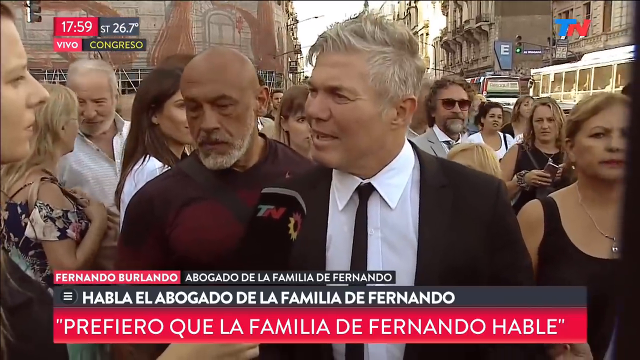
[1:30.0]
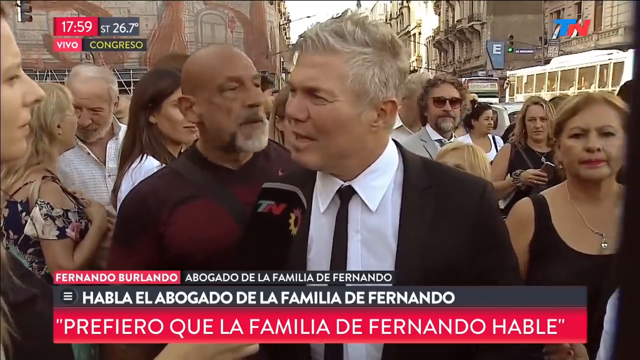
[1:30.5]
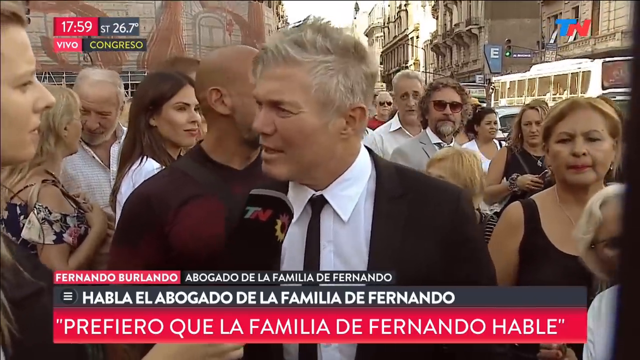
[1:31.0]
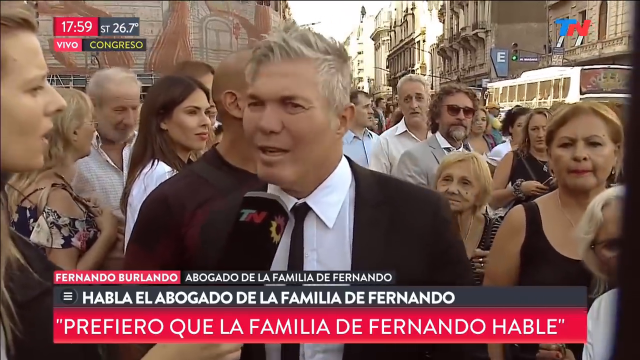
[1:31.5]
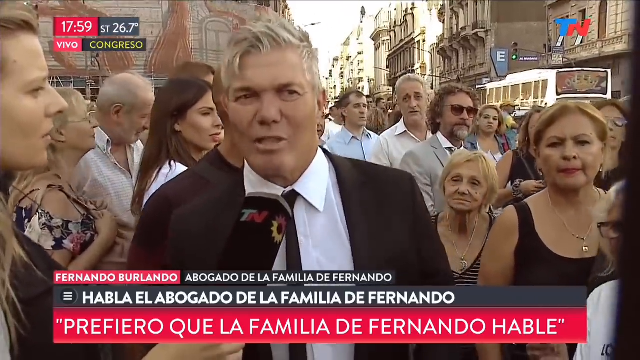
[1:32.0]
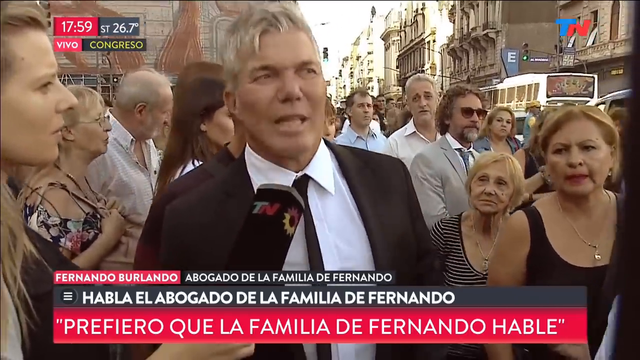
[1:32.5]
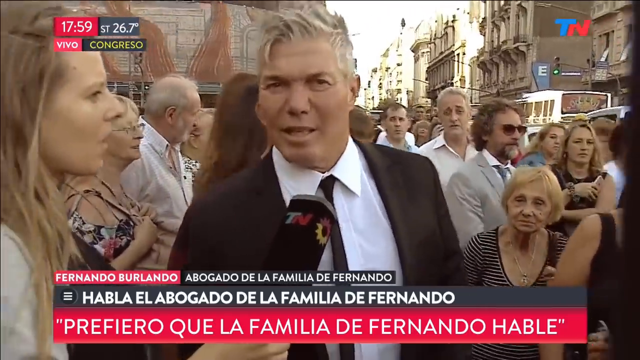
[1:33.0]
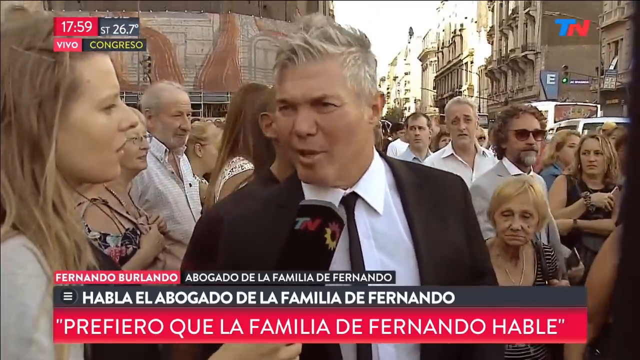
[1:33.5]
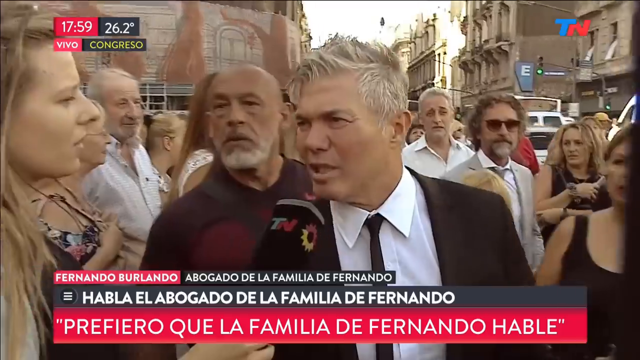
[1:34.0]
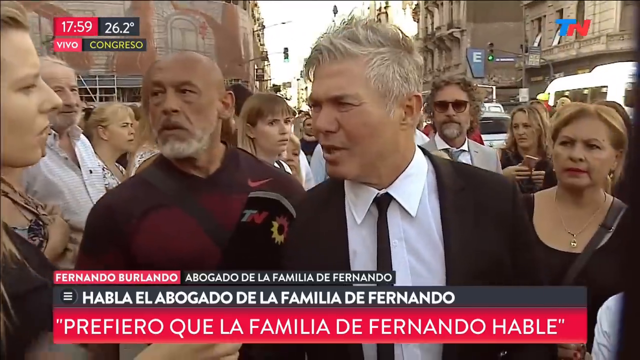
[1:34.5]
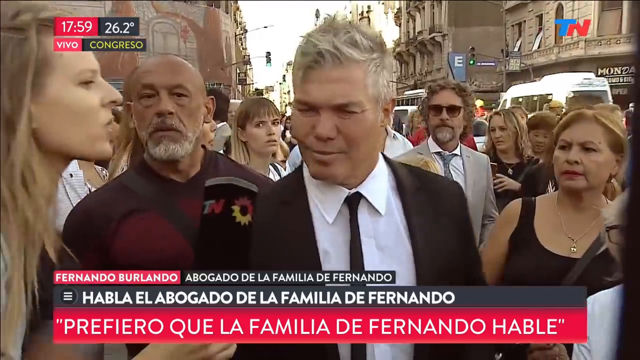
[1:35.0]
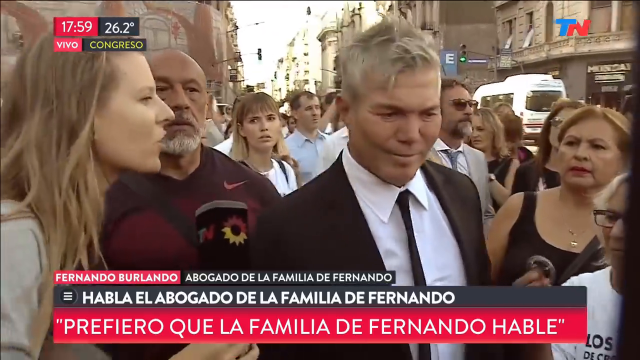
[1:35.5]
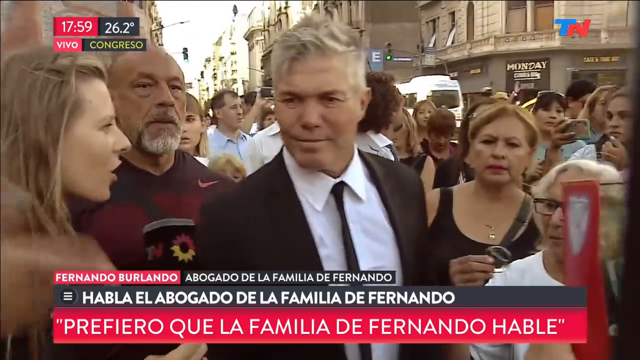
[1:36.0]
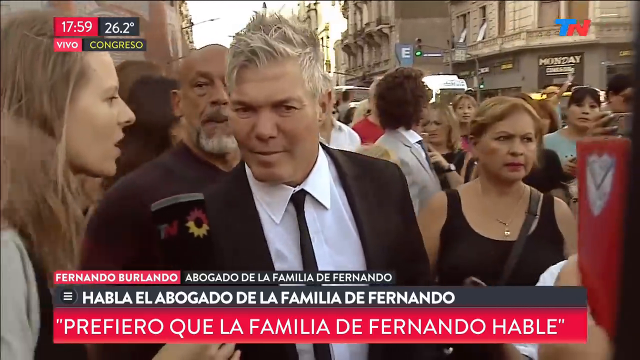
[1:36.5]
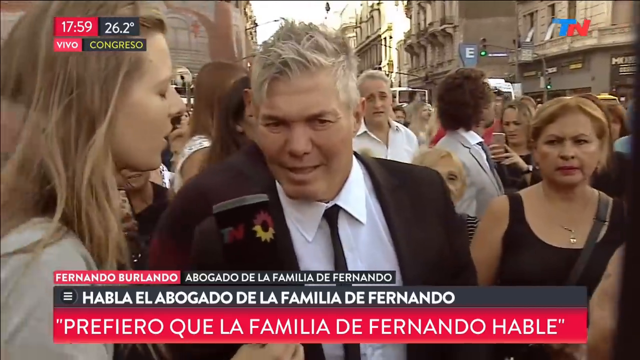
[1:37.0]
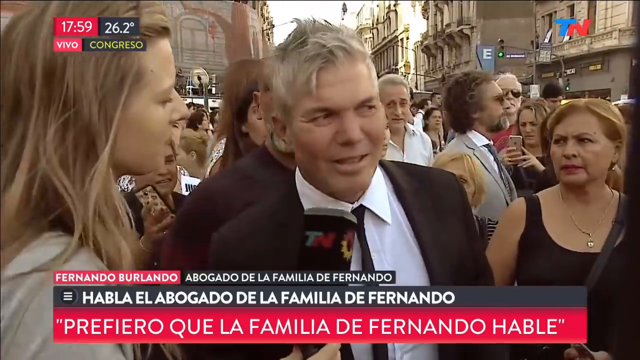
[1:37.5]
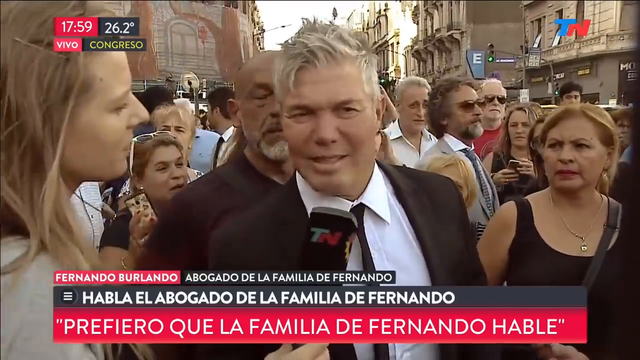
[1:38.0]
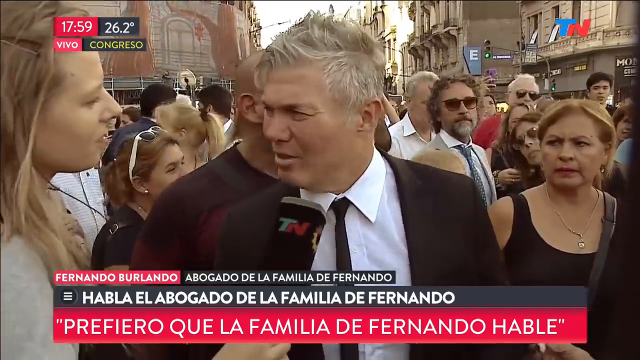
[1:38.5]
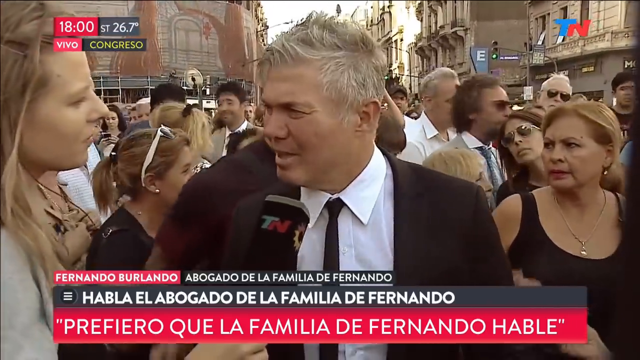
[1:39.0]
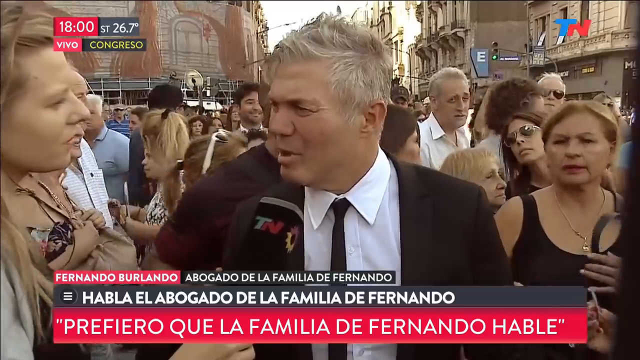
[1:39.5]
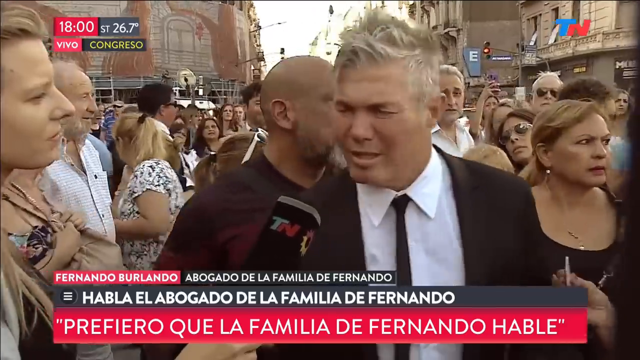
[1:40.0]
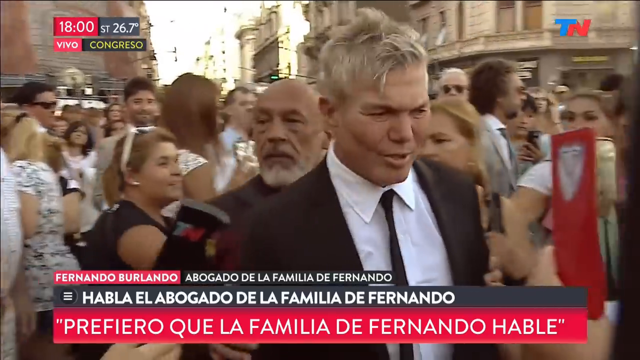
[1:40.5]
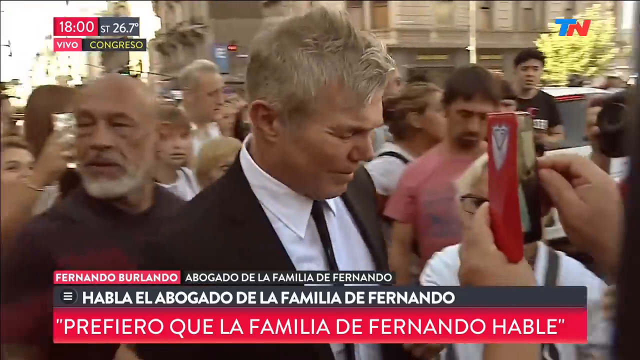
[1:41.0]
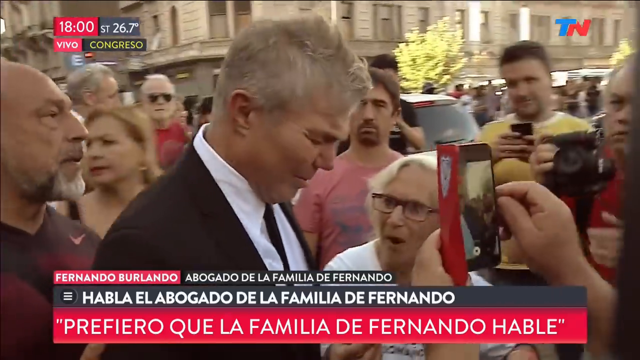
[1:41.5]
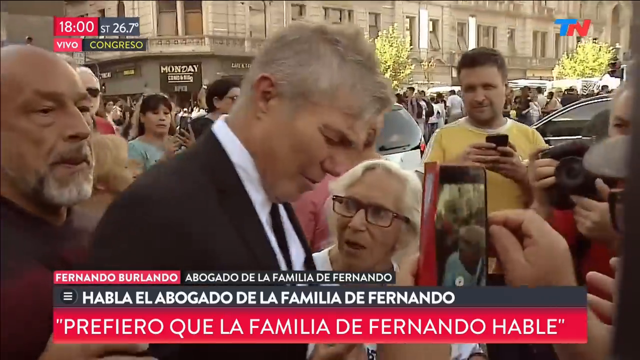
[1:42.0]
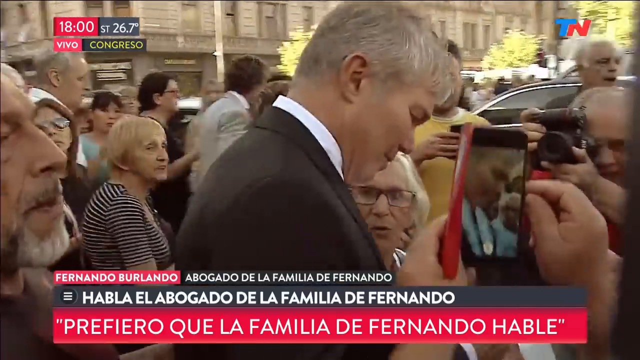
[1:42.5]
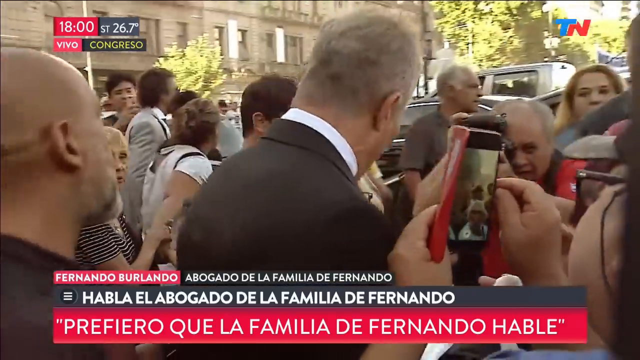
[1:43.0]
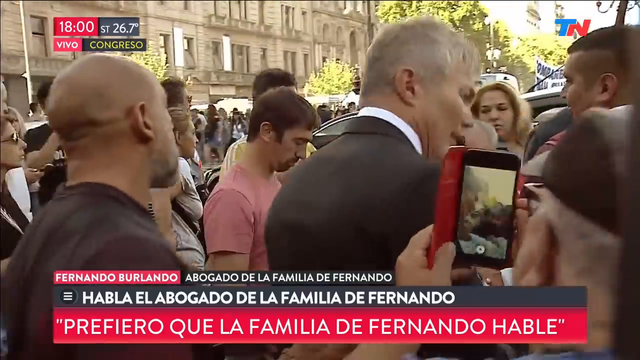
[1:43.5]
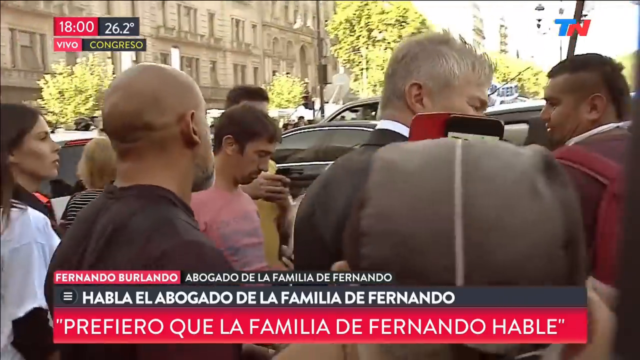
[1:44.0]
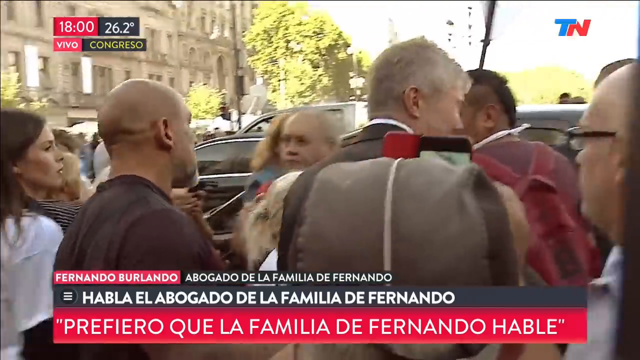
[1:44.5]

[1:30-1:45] A man in a black suit, a white shirt, and a black tie speaks into a microphone, his body facing the camera and his head turned to the left toward the woman holding the microphone. Behind him are a large crowd and large towering buildings. He is very expressive, nodding, shaking his head, and looking around at the crowd in front of him. He then begins to walk away from the woman, and the camera pans to his side and then behind him, then stays still as he continues walking away. The crowd follows him, a few people holding cameras and others pointing their phones at him, presumably recording. The crowd is dense, and it appears difficult for him to walk through. White text in a red rectangle at the bottom reads "PREFIERO QUE LA FAMILIA DE FERNANDO HABLE", and a blue and red TN logo appears in the lower right and upper right corners.